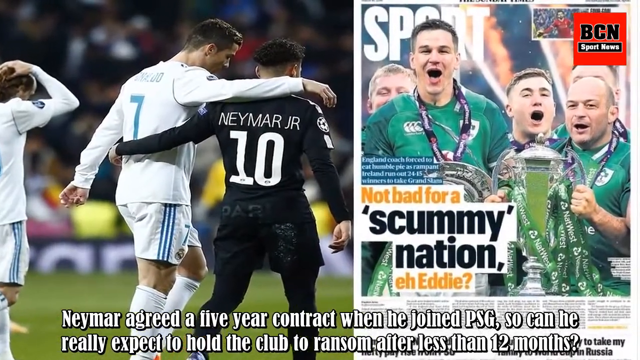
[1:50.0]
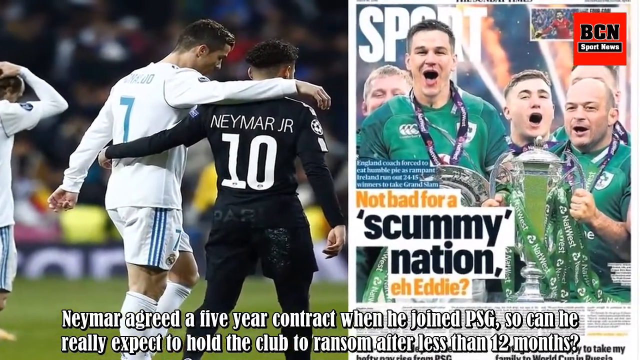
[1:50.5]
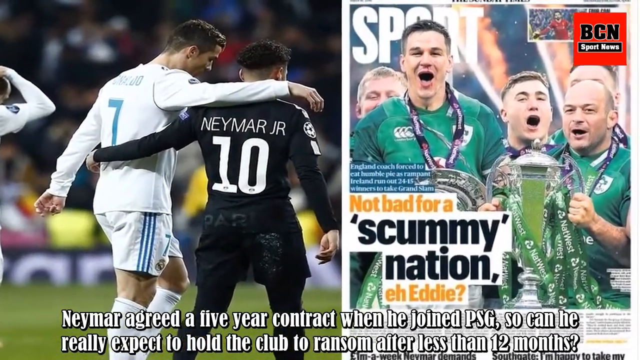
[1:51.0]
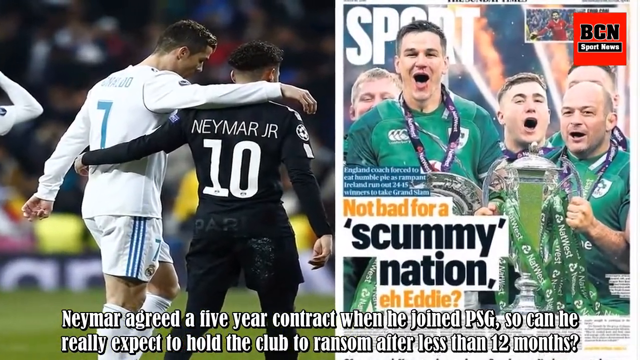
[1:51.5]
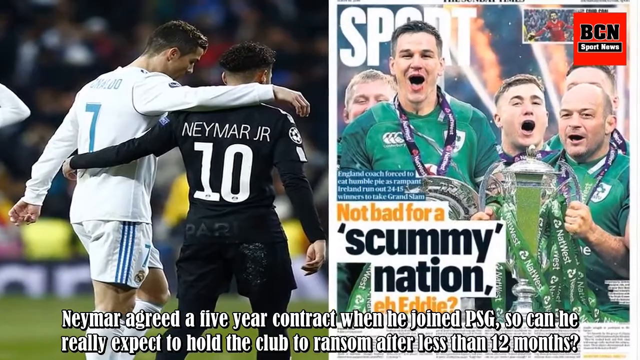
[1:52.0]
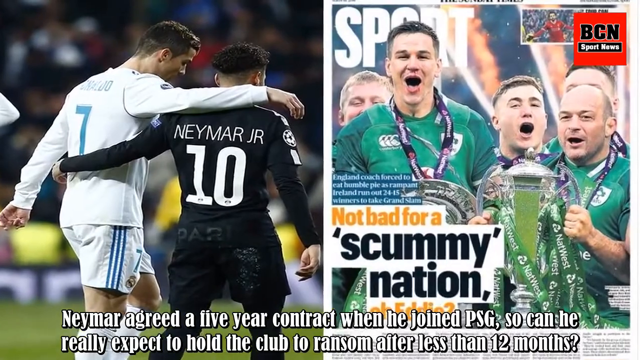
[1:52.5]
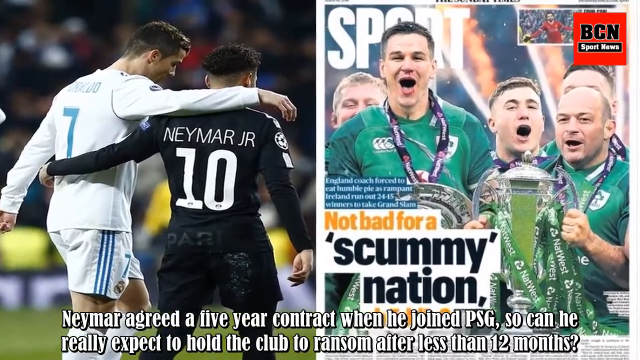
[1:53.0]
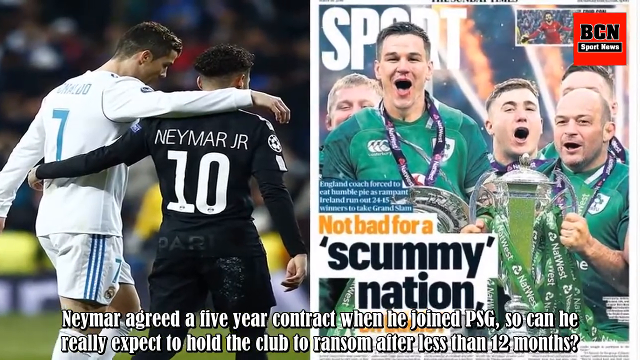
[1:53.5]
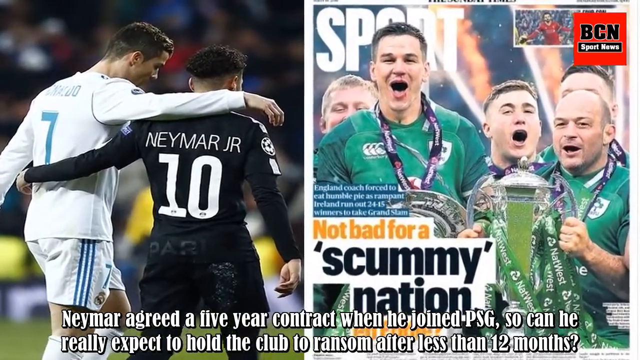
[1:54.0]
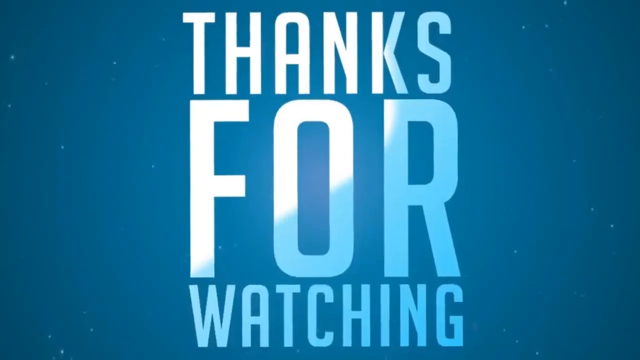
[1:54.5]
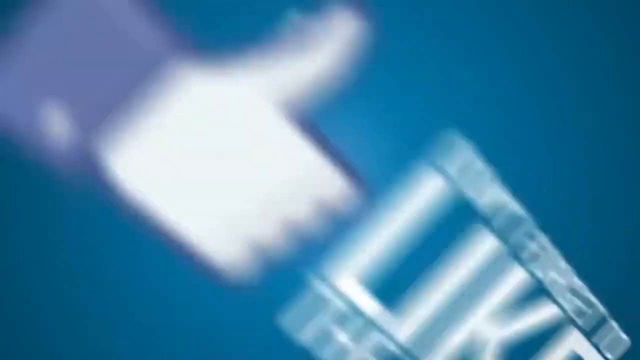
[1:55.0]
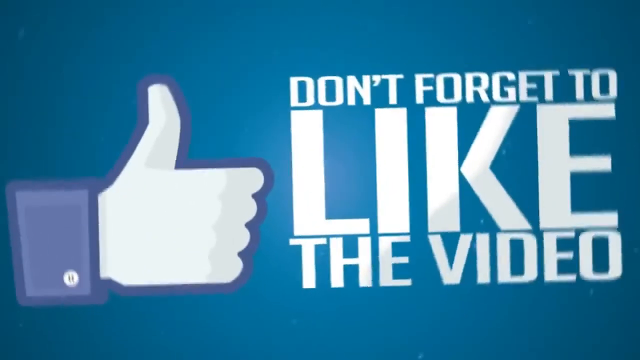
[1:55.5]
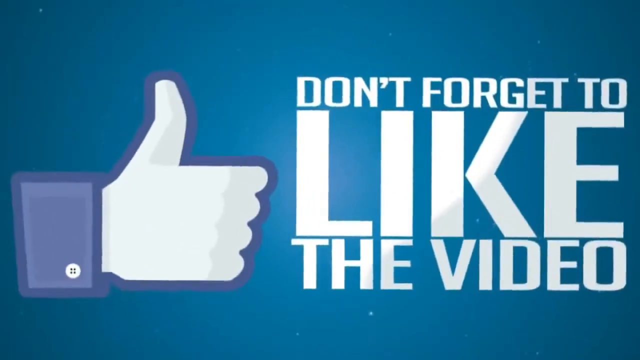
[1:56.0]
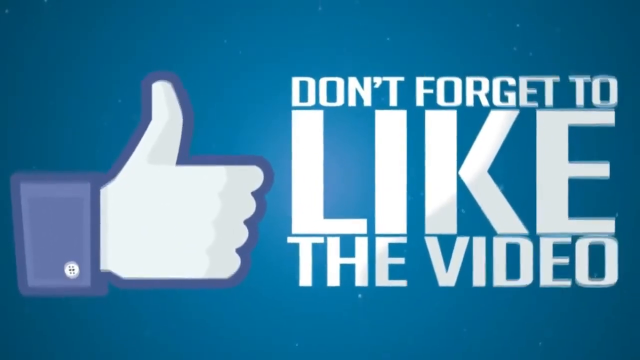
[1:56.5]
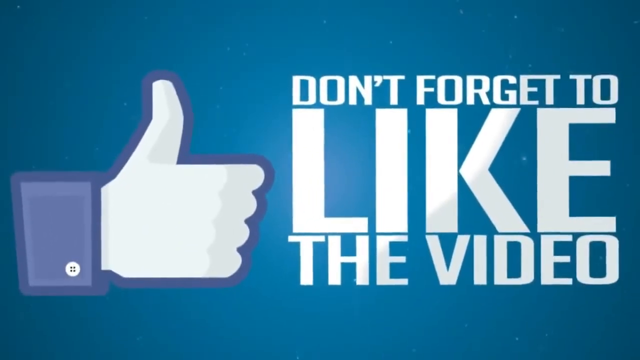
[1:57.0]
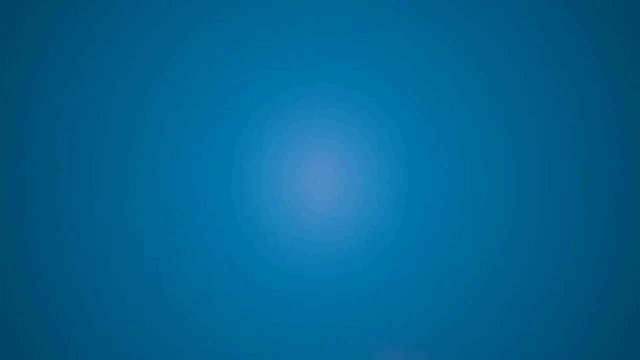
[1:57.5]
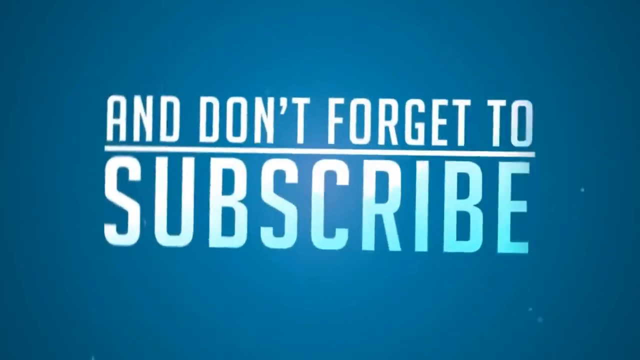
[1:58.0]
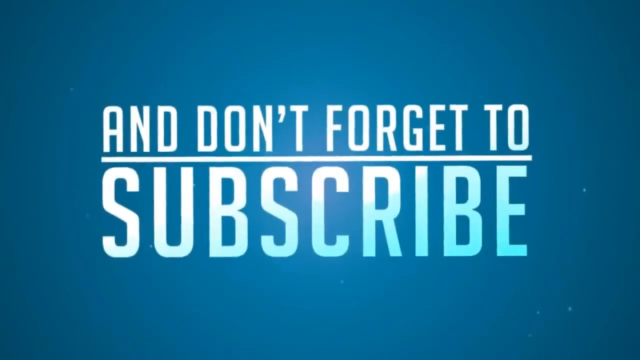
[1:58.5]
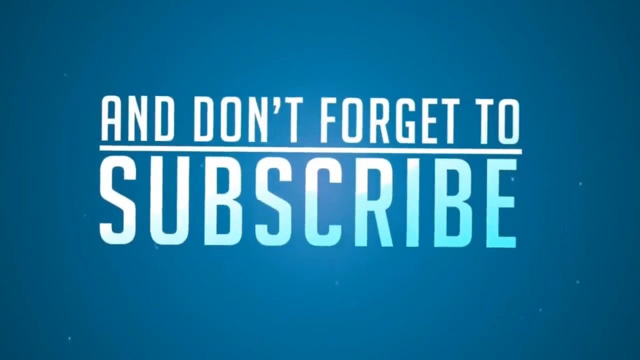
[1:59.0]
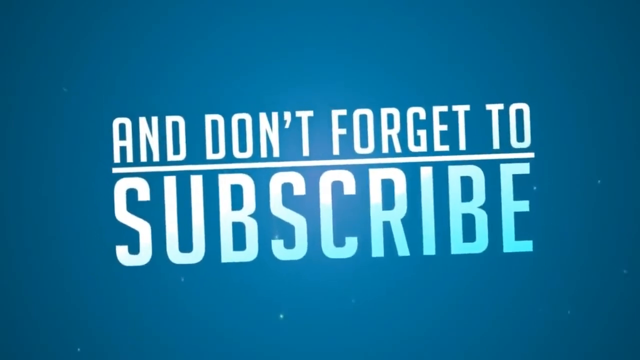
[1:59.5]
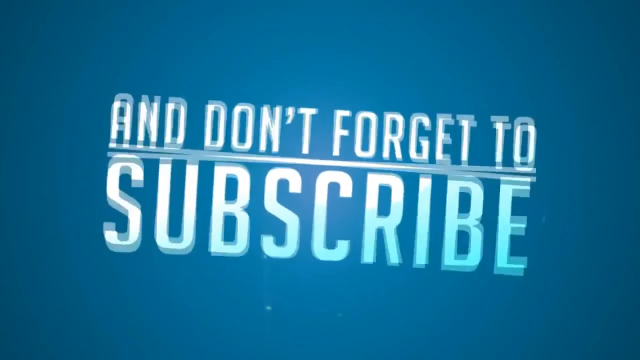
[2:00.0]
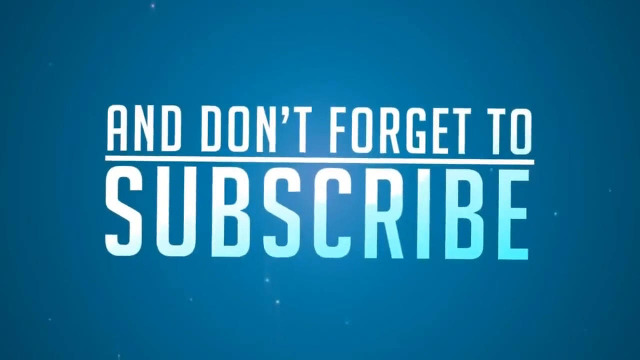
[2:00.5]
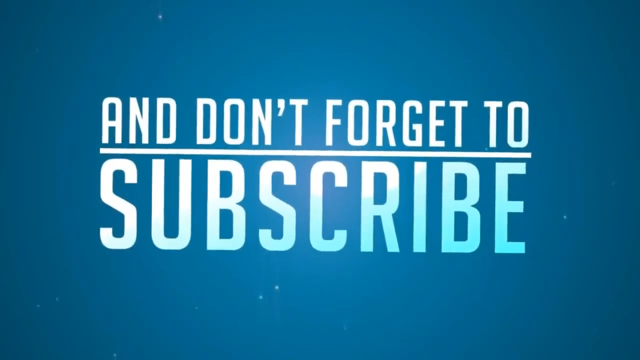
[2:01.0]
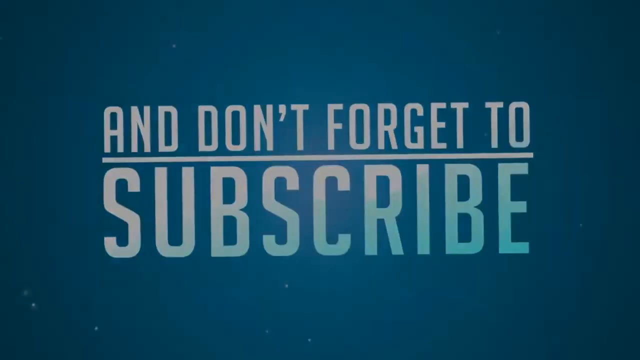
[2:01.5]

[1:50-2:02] Text at the bottom asks "So he really expects to hold the club to ransom after less than 12 months?" Then a blue background shows white text that says "thanks for watching". The video moves to another screen with a blue background and a blue and white thumbs-up icon that looks like the thumbs up from Facebook or another social media app. White text to the right says "don't forget to like the video", with "Like" the biggest word. A different text screen follows that says "don't forget to subscribe".